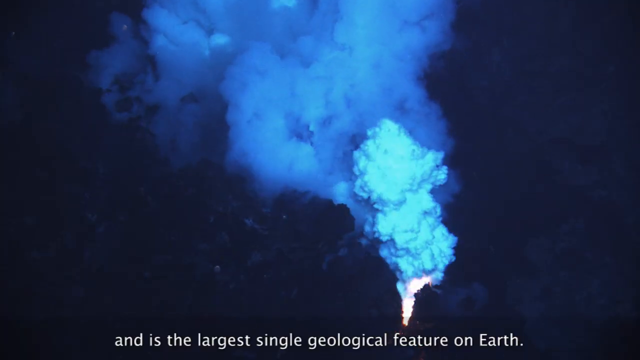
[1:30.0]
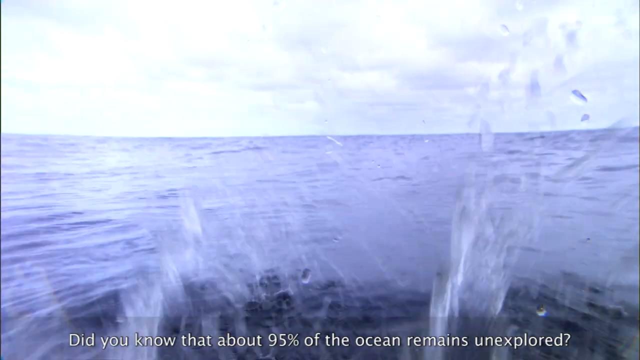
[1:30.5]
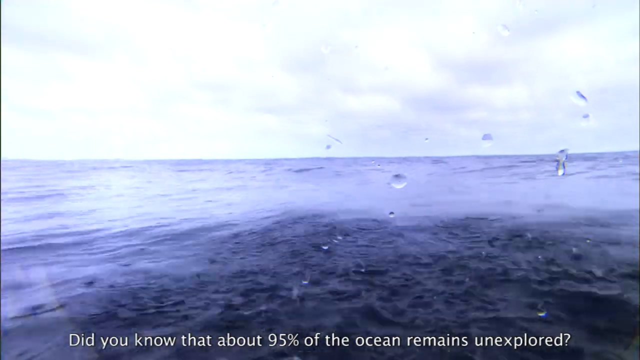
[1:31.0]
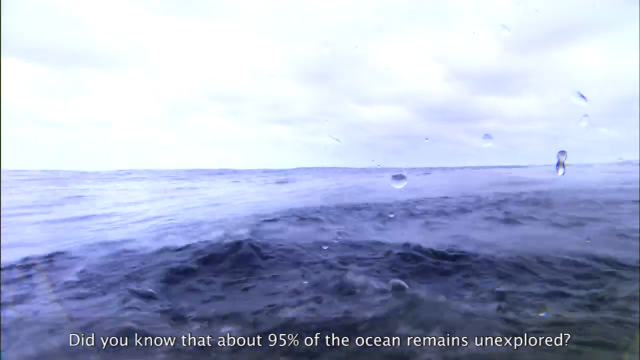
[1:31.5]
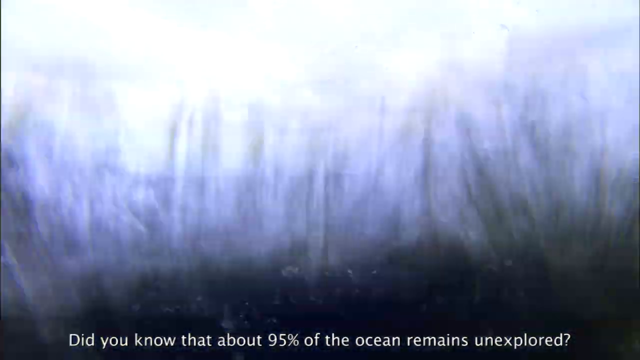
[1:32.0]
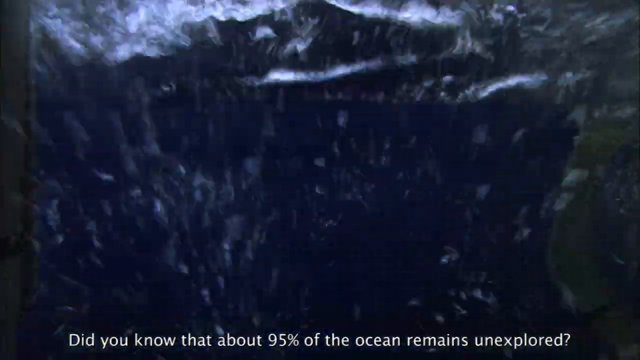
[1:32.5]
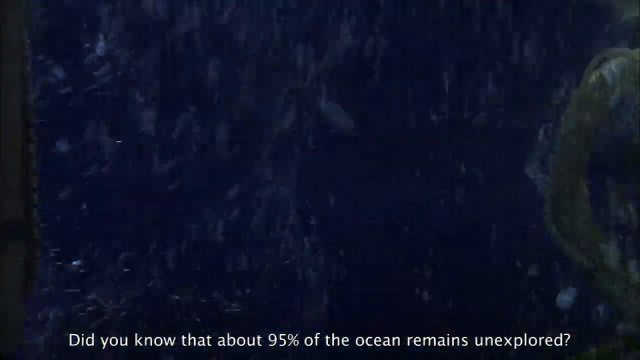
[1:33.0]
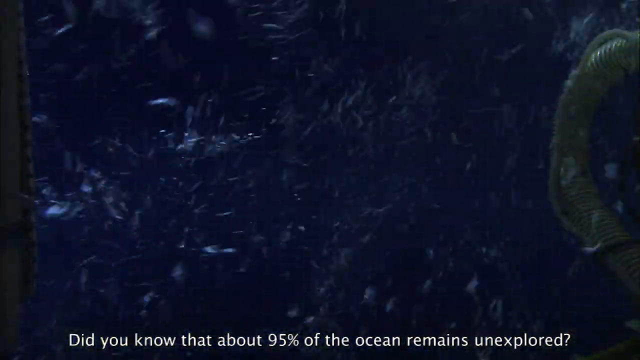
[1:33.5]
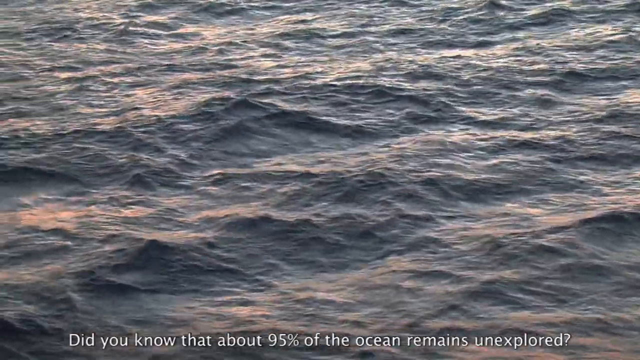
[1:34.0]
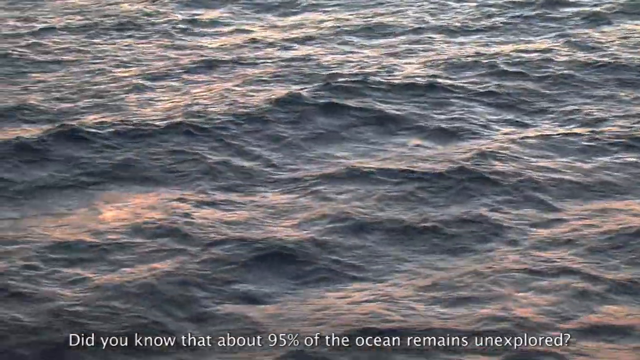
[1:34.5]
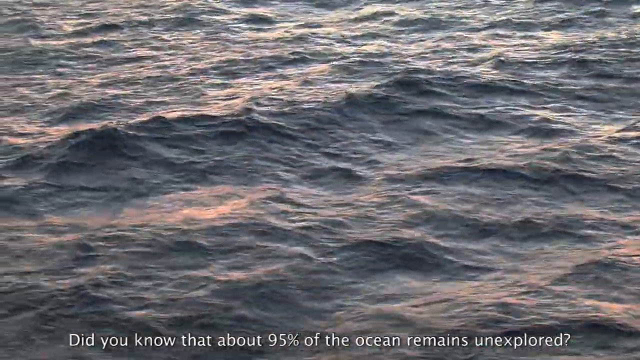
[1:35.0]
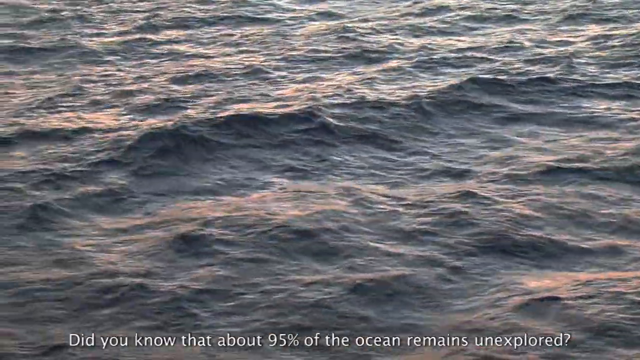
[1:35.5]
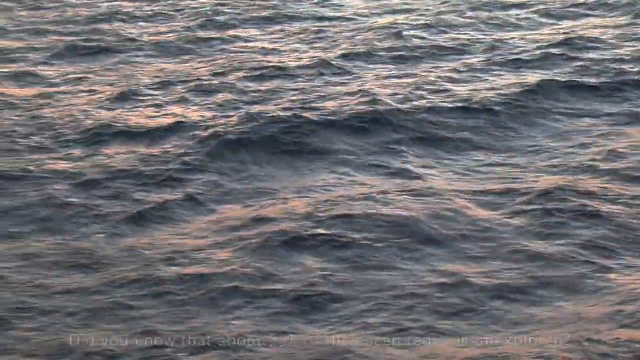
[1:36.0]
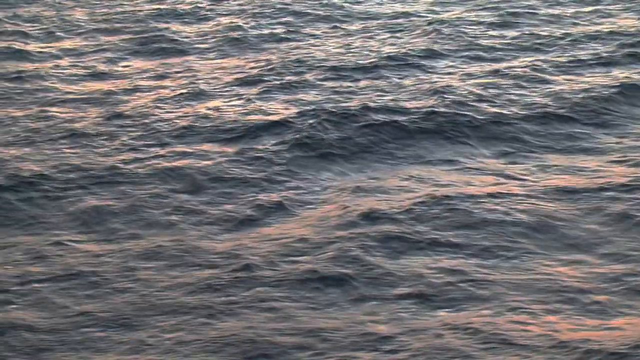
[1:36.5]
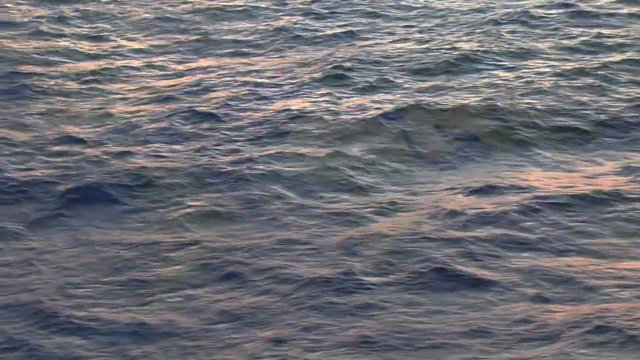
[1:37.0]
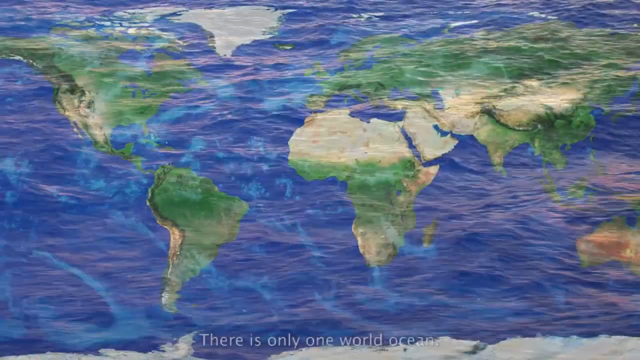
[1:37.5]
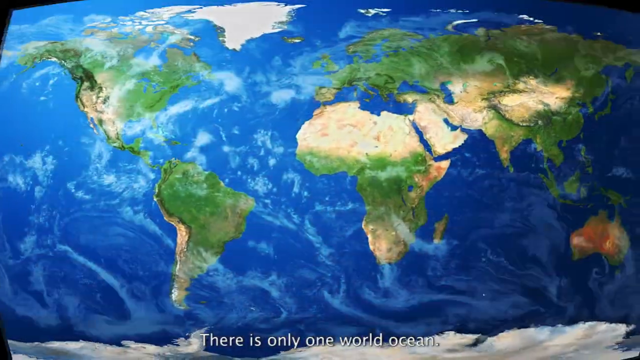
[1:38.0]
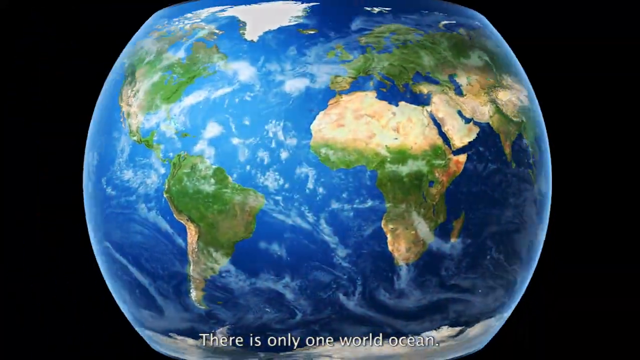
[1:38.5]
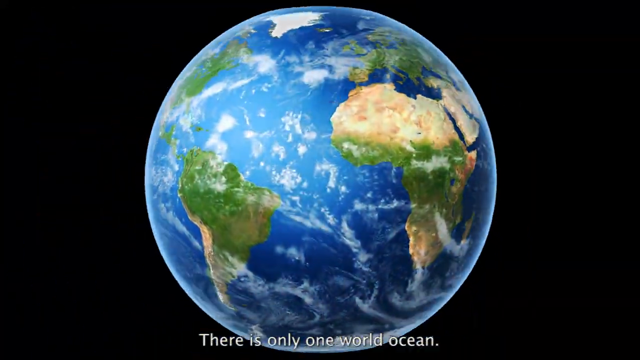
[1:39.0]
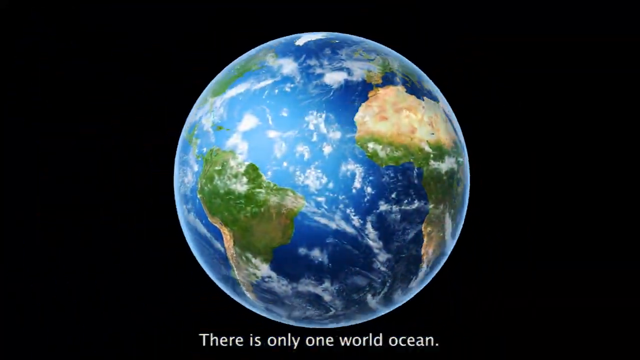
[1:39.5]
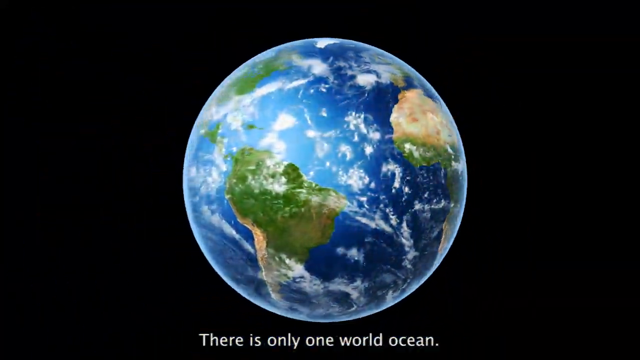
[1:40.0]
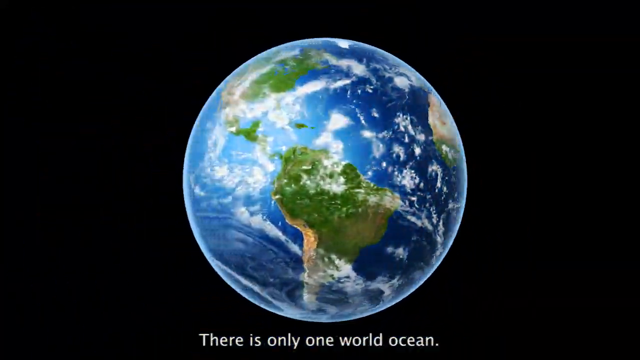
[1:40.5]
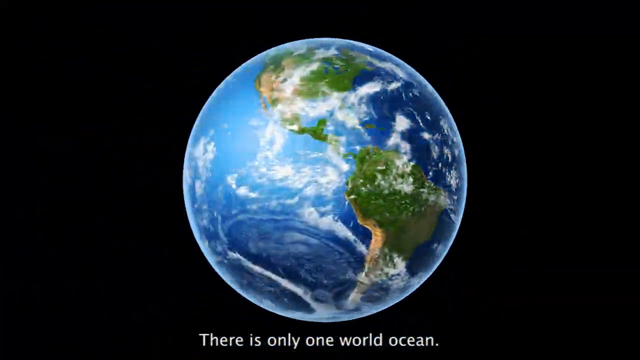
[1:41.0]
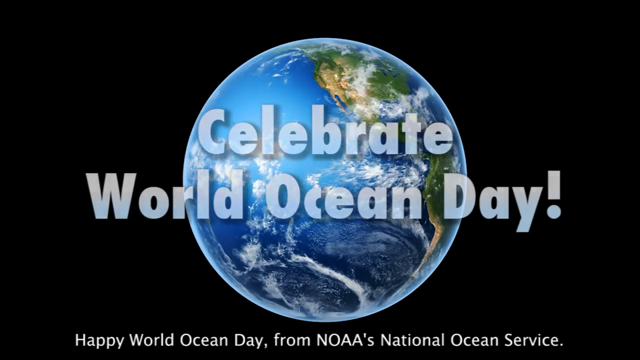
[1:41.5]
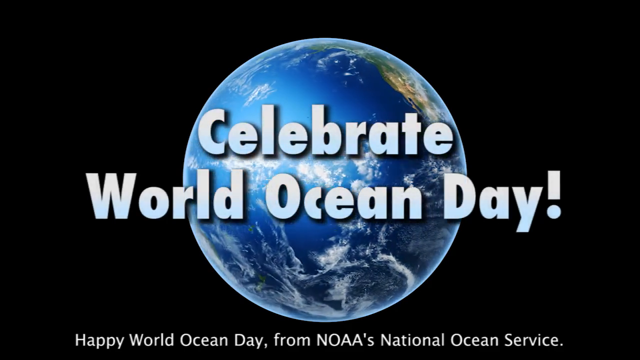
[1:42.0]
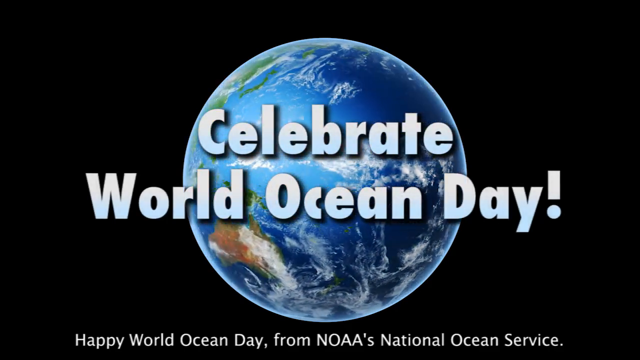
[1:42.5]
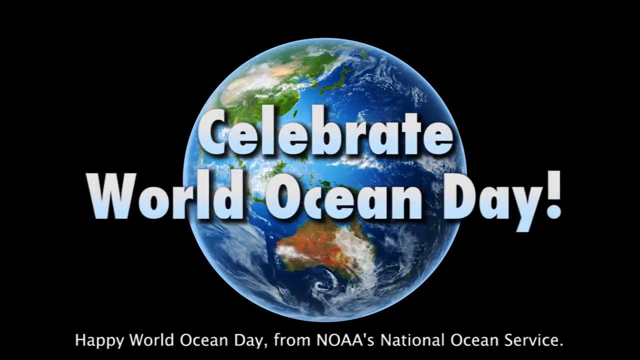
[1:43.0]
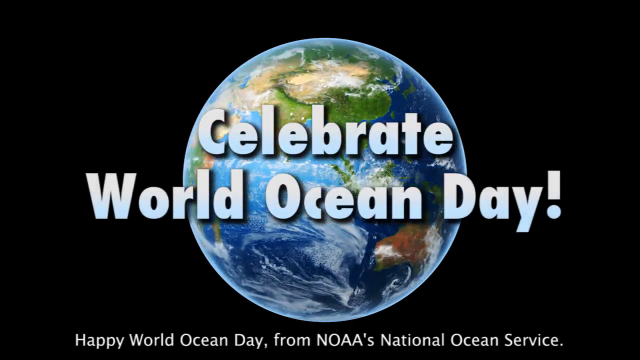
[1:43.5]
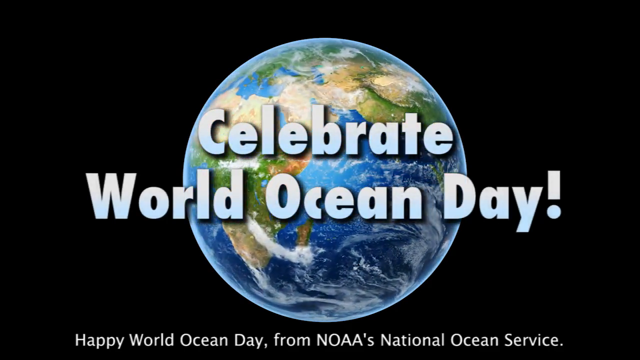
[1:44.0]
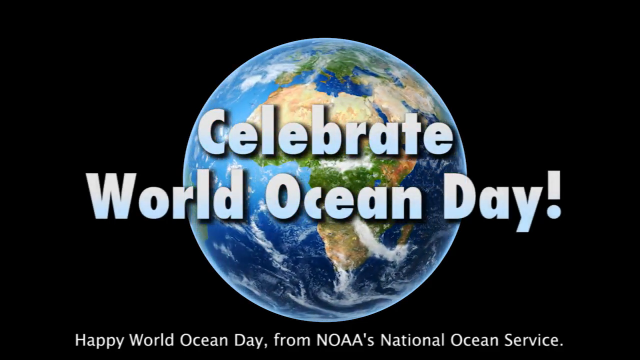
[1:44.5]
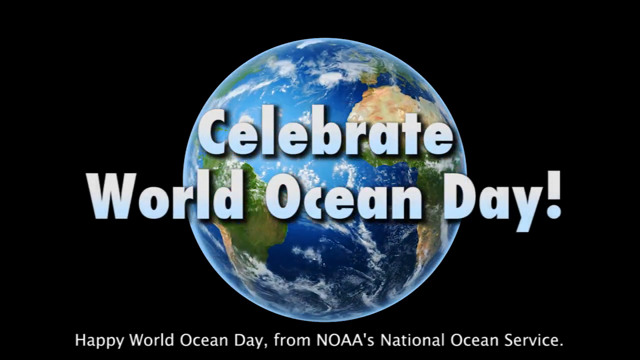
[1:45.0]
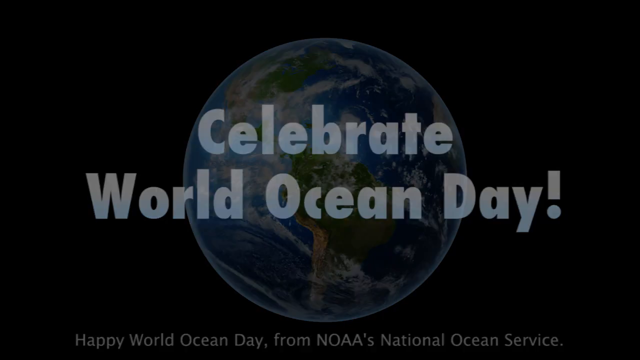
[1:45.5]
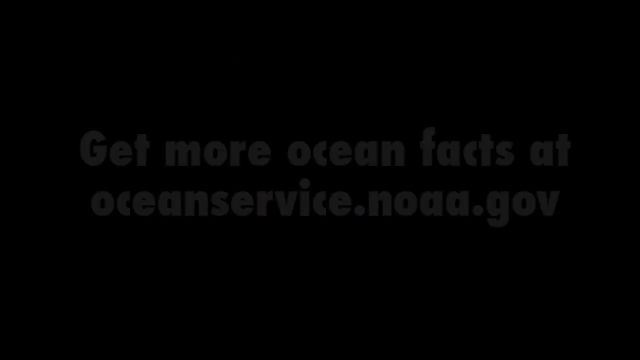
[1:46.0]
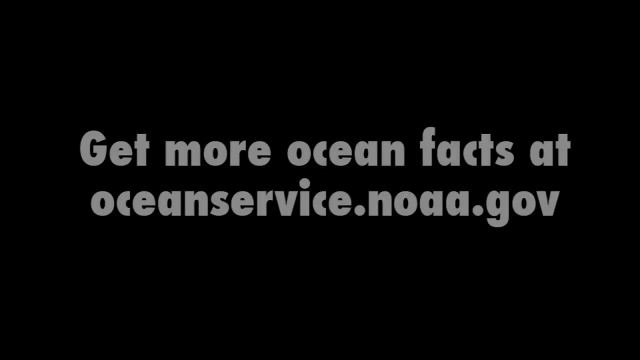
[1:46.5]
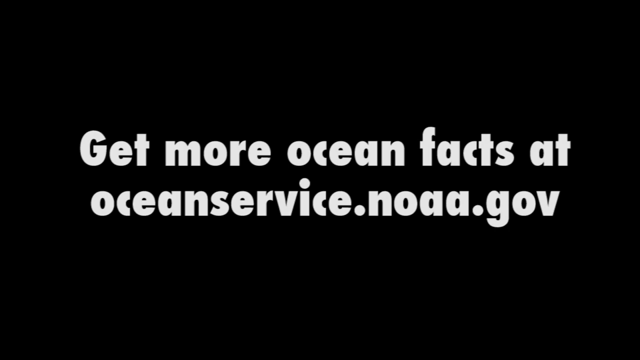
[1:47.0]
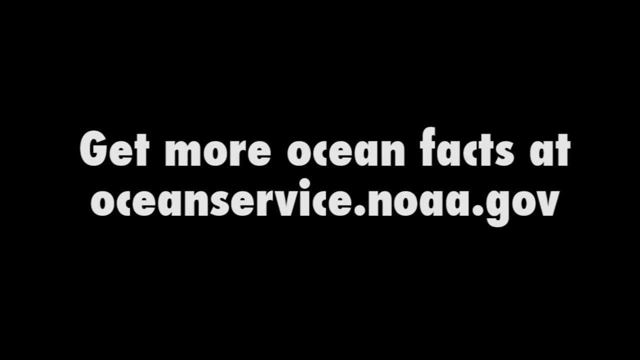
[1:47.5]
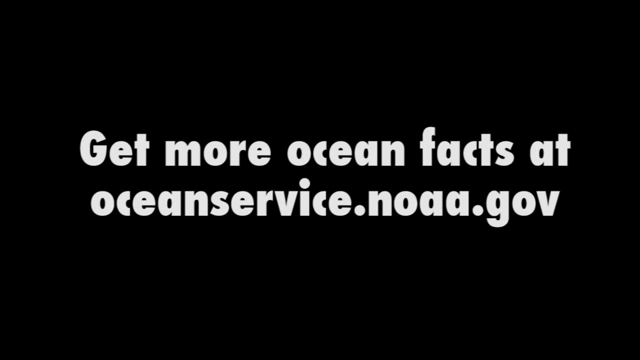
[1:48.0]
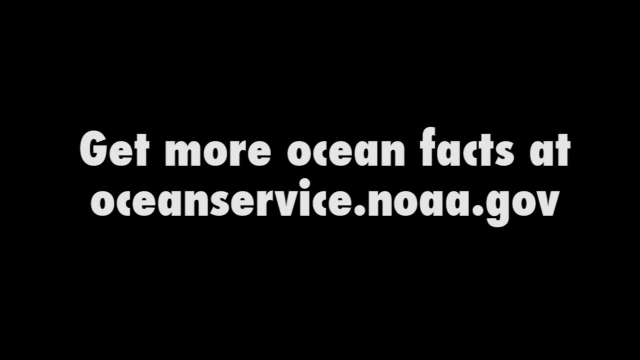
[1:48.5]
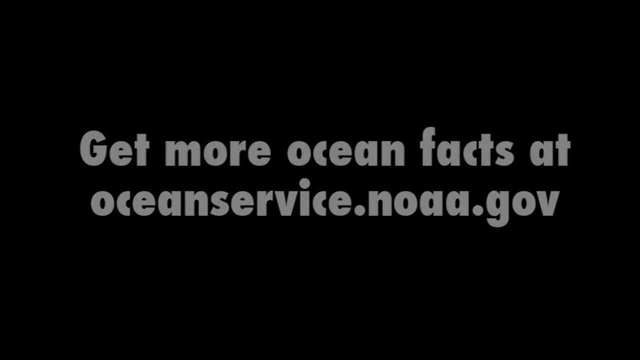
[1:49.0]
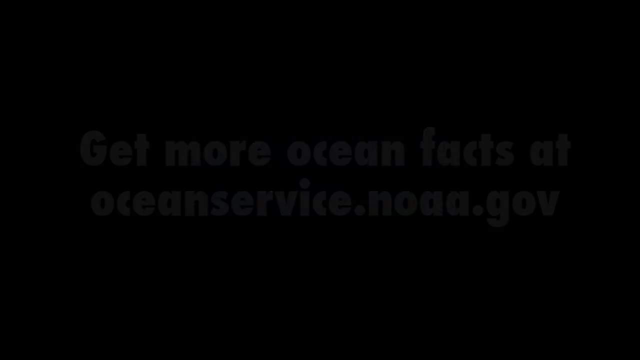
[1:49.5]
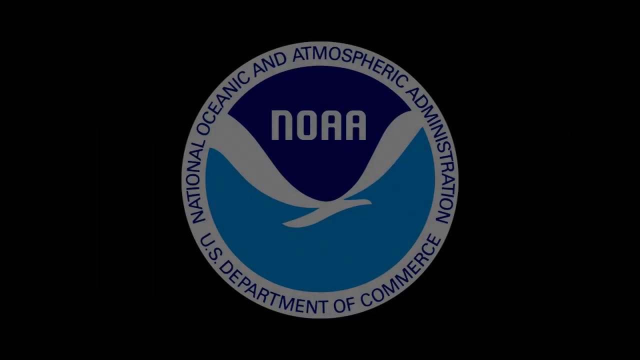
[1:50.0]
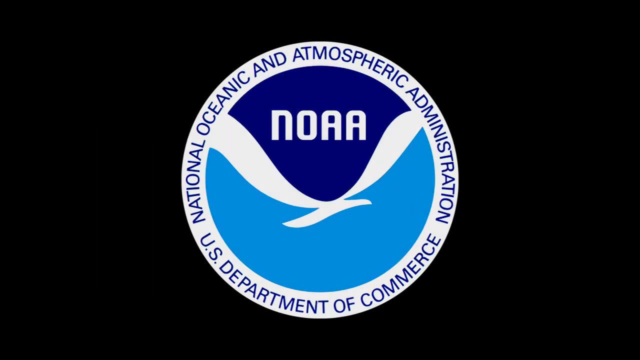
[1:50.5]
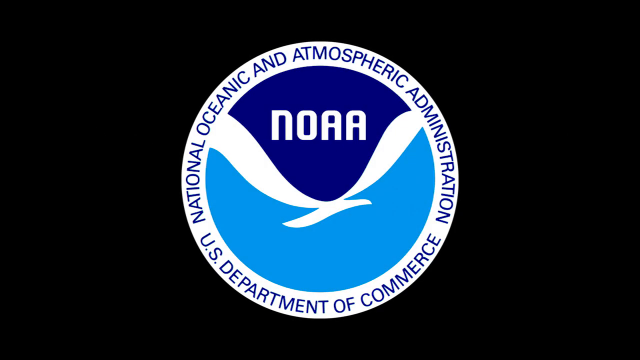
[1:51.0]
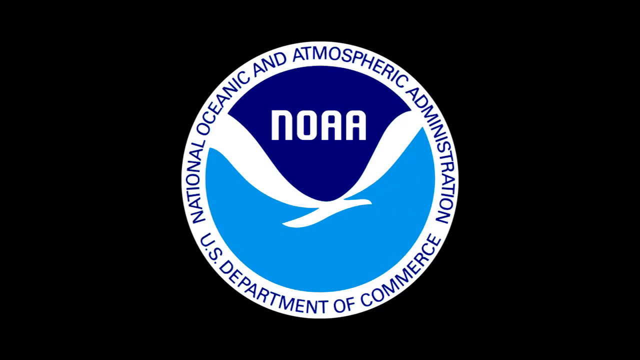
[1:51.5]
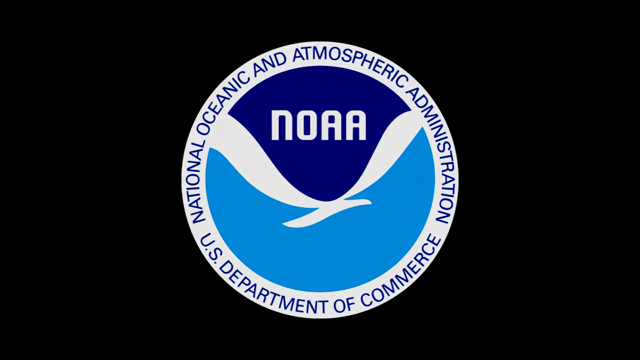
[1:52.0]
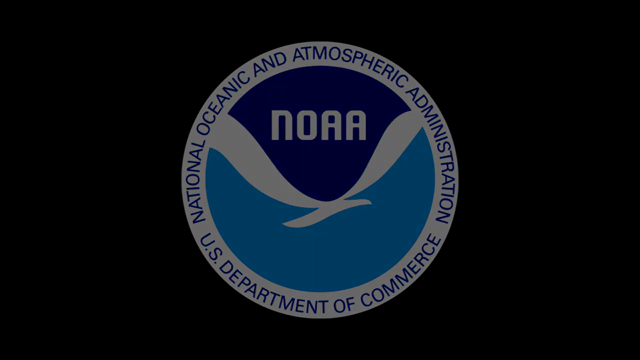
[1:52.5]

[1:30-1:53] Different shots of the ocean surface are shown, with text reading "there's only one World Ocean" and "Celebrate World Ocean Day." A spinning globe appears, followed by the text "Get more oceanfacts.gov."